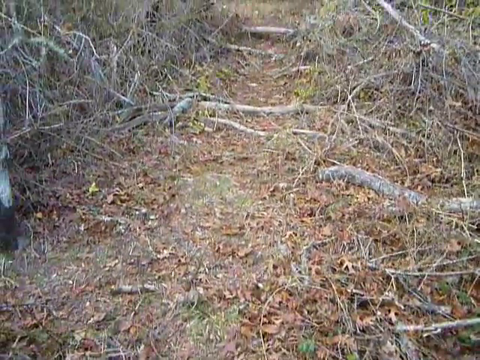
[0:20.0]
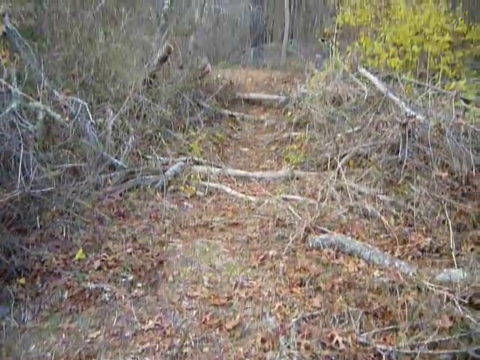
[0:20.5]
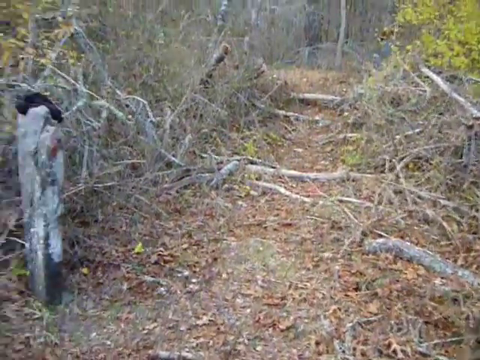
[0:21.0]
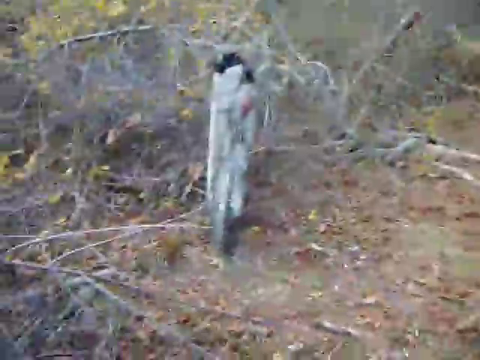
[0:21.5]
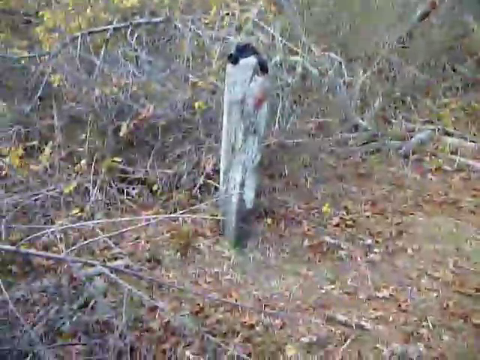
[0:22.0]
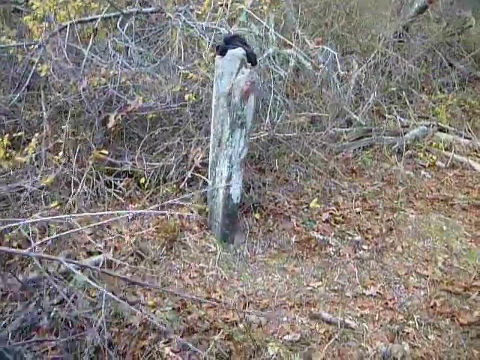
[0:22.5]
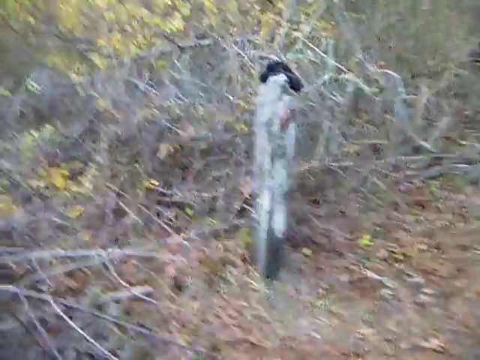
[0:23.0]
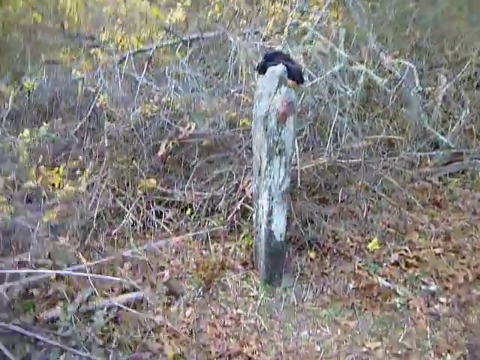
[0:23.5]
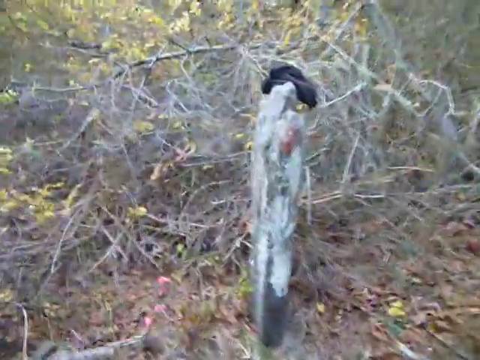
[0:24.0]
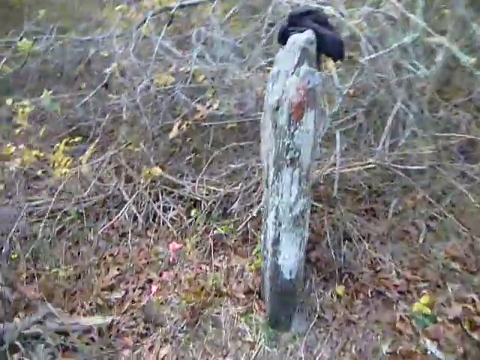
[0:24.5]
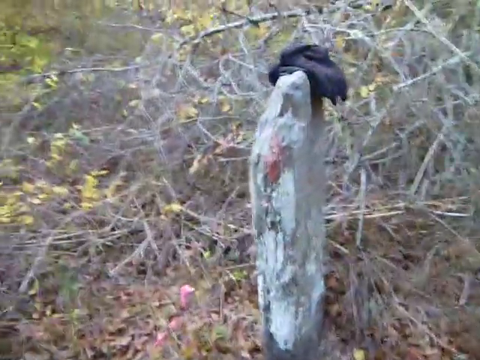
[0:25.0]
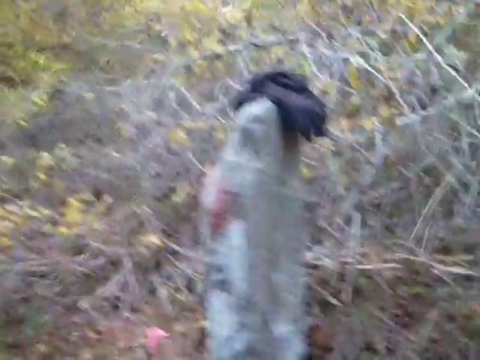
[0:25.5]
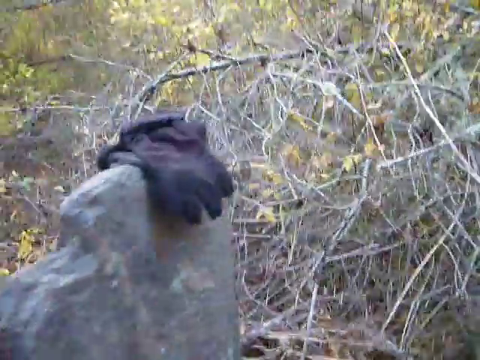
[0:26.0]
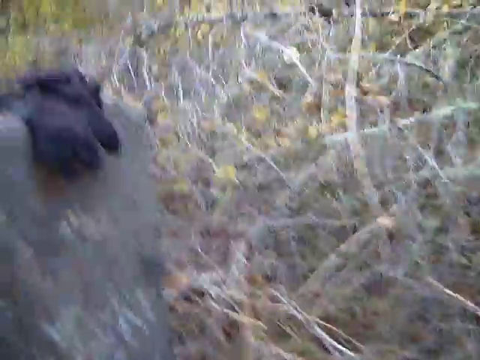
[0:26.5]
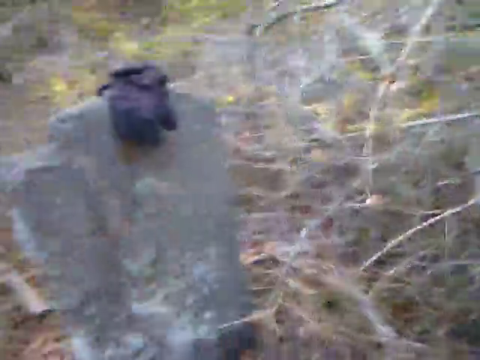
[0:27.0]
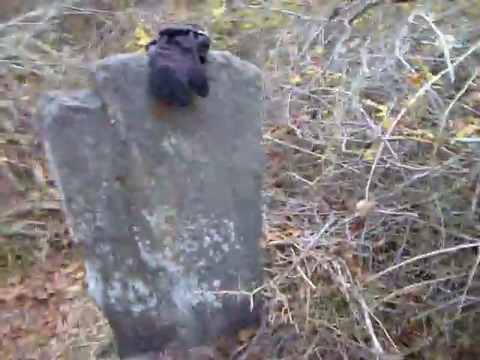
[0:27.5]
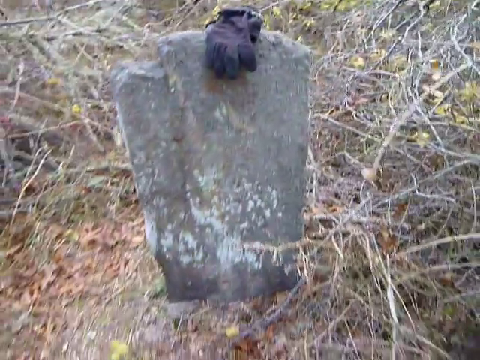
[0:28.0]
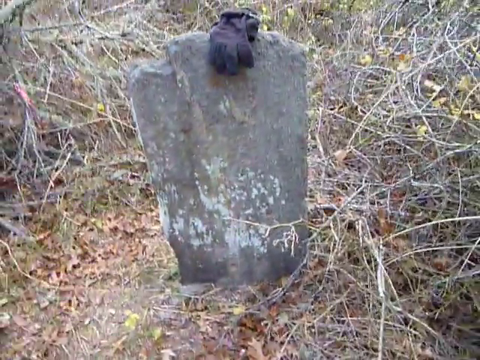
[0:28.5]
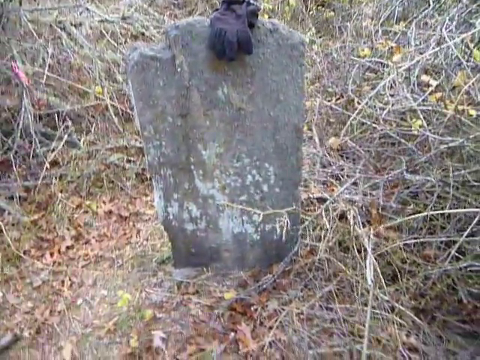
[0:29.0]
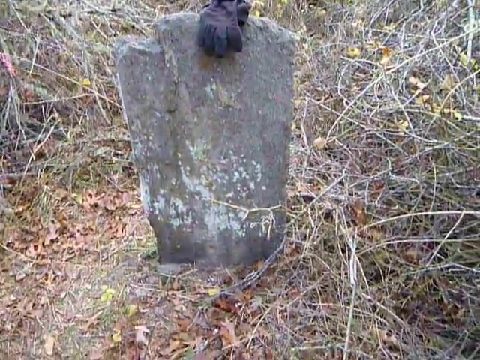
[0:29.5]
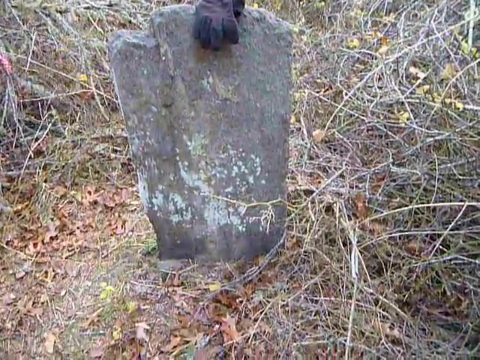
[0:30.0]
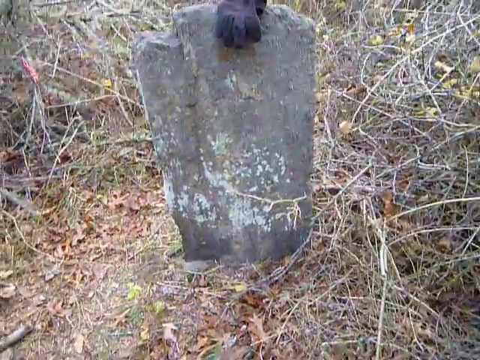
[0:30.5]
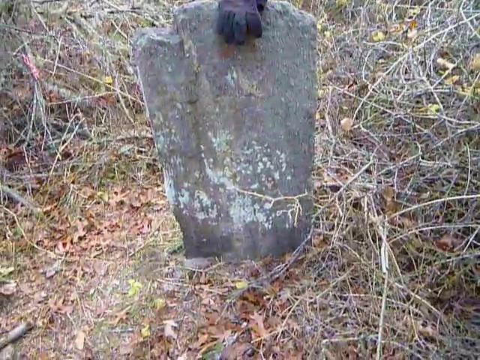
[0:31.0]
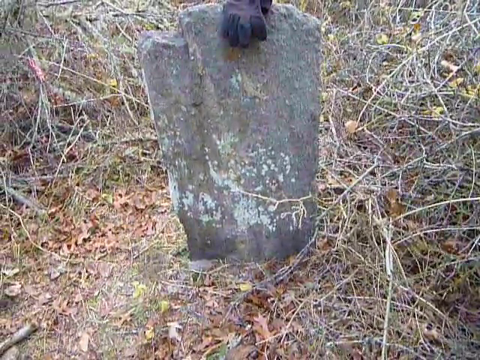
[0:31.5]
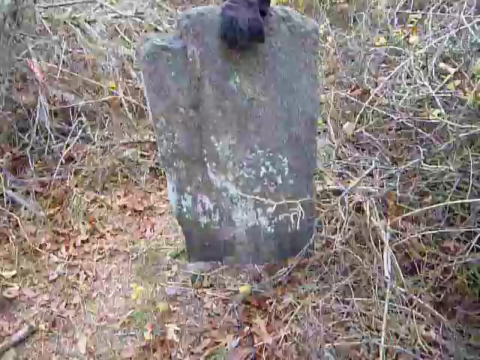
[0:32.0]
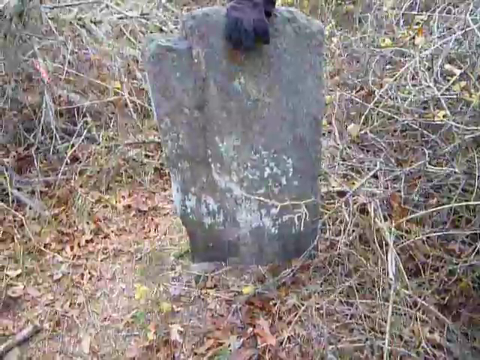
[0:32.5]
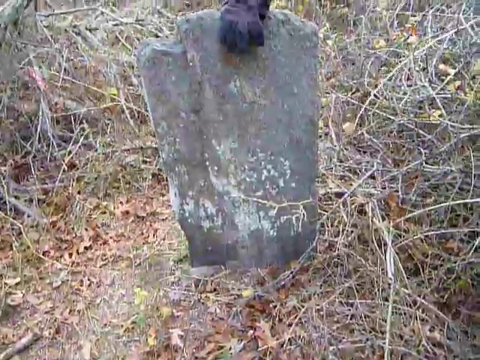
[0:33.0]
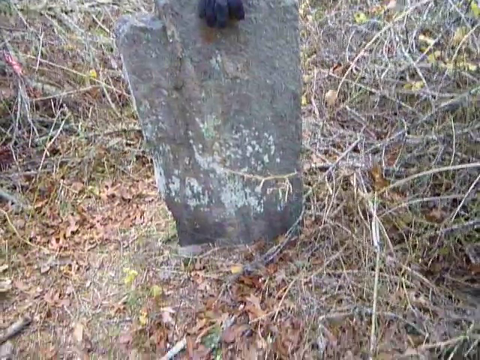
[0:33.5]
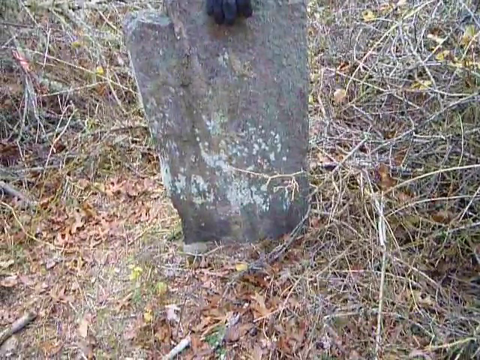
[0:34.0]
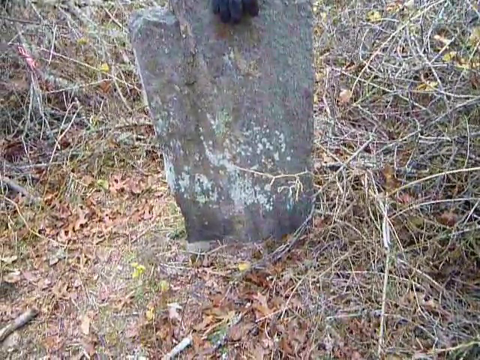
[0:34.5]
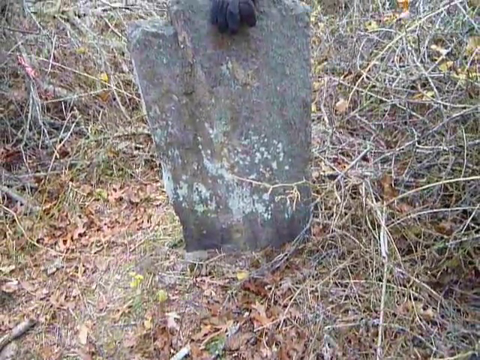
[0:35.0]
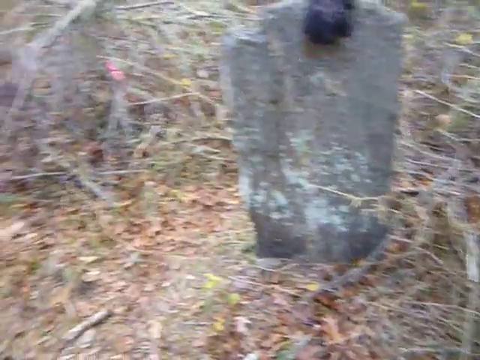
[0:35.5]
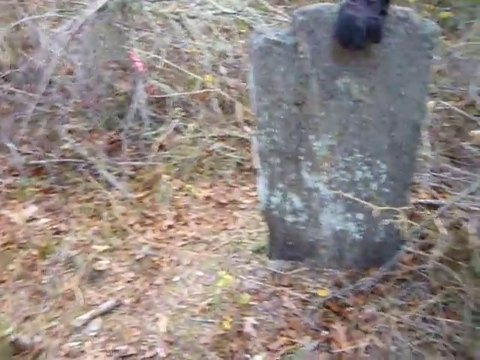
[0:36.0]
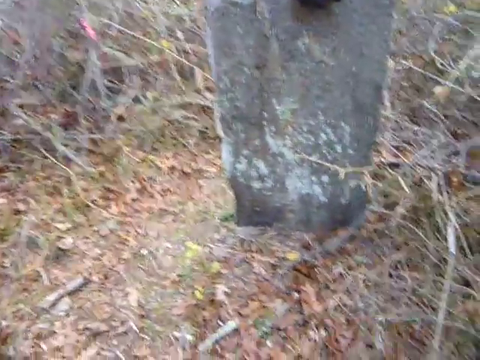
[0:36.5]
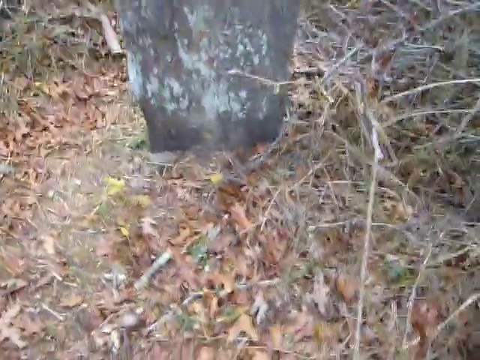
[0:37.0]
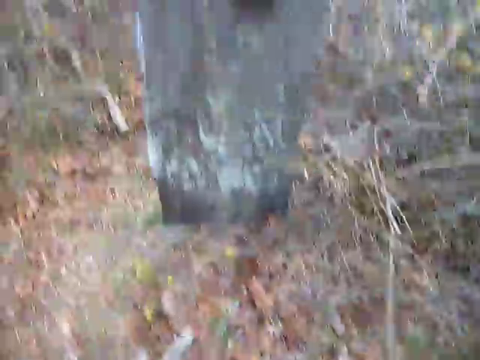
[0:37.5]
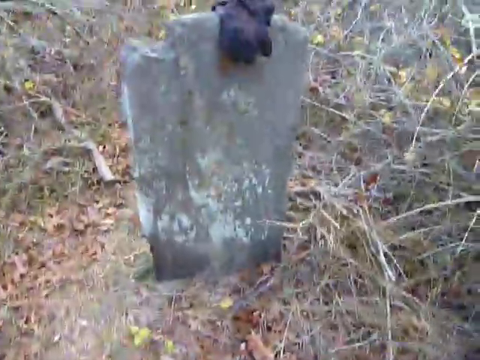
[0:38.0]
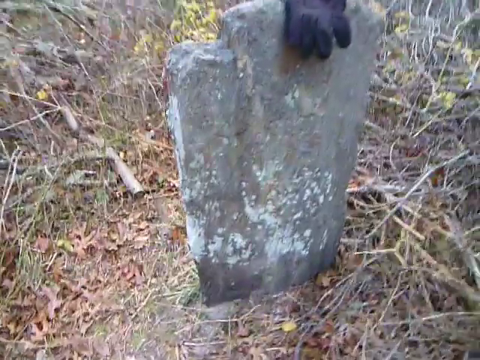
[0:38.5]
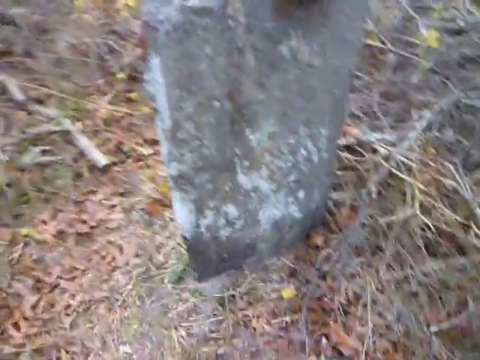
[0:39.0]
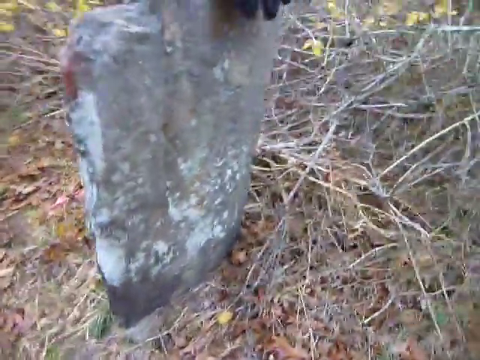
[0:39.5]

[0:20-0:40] The same place is still in view: the small path between two huge piles of fallen branches. What was on the left, which looked like the trunk of a broken tree, turns out to look like a small, careless tombstone with black gloves on it. It has no written text; it is simply a gray stone with white marks, which the cameraman begins to record up close. He focuses on it, first from one side and then from the front, where it can be seen that it has no text or anything significant on it.